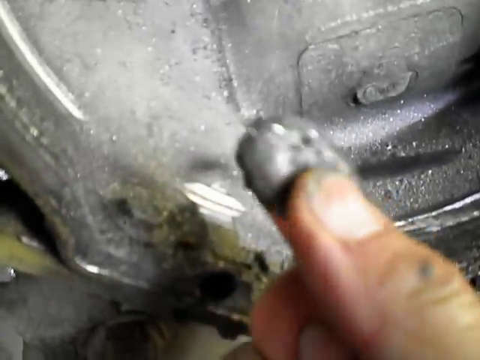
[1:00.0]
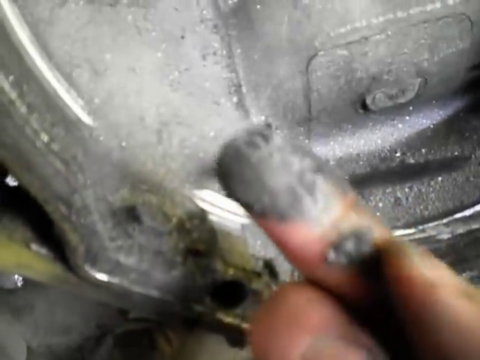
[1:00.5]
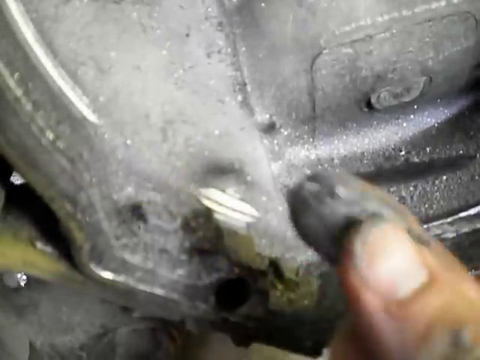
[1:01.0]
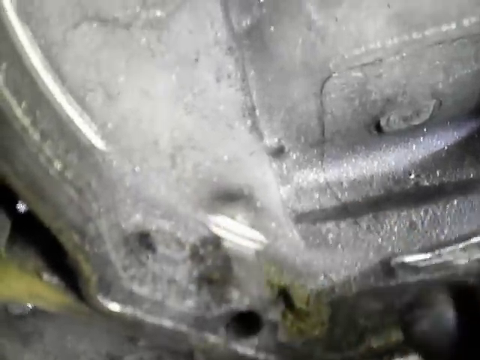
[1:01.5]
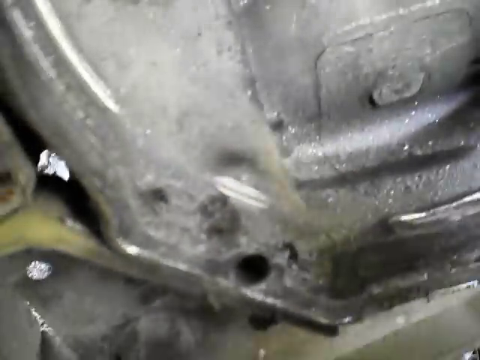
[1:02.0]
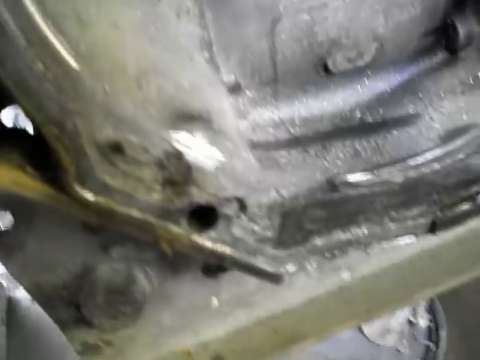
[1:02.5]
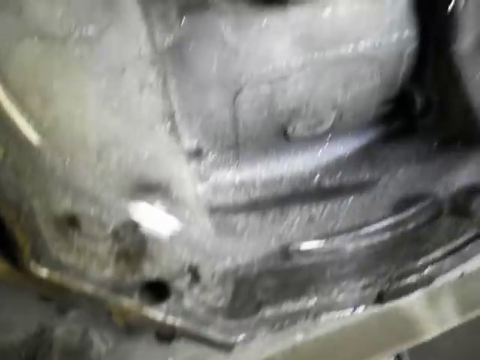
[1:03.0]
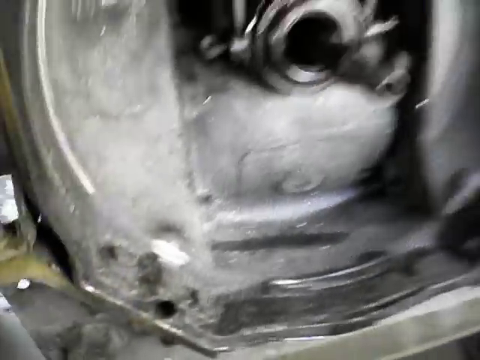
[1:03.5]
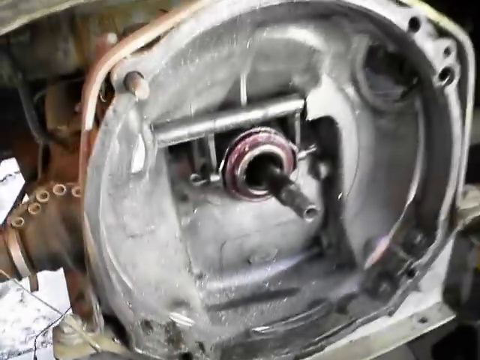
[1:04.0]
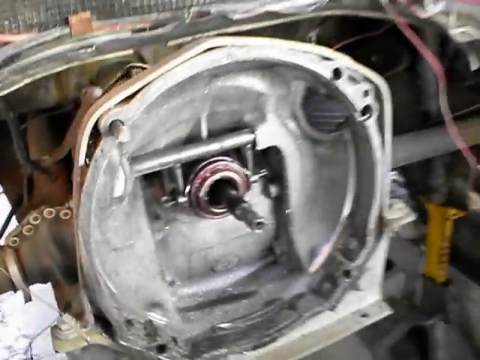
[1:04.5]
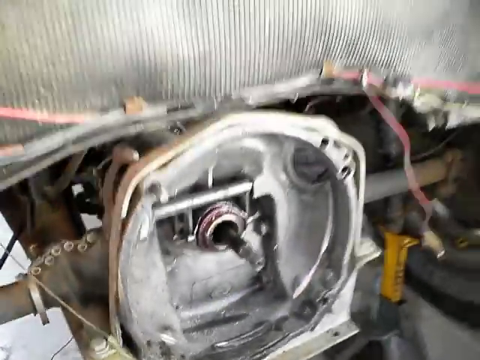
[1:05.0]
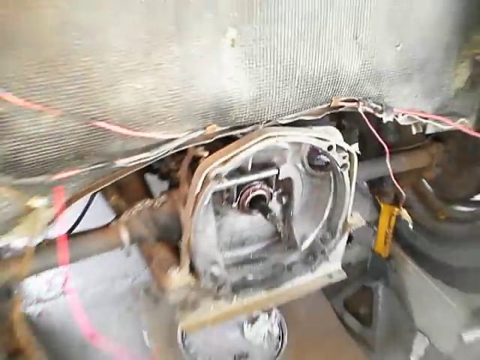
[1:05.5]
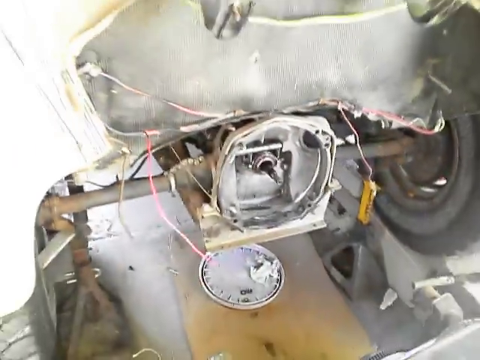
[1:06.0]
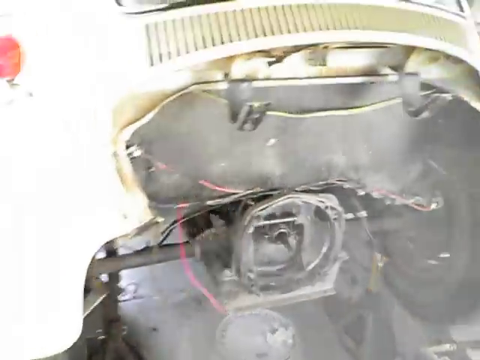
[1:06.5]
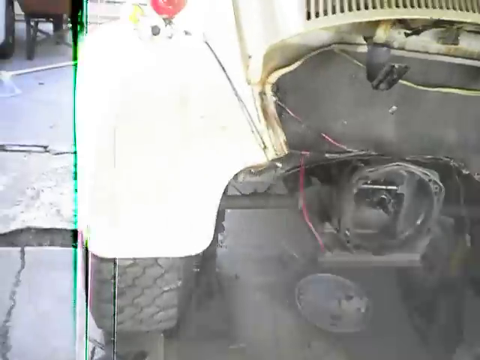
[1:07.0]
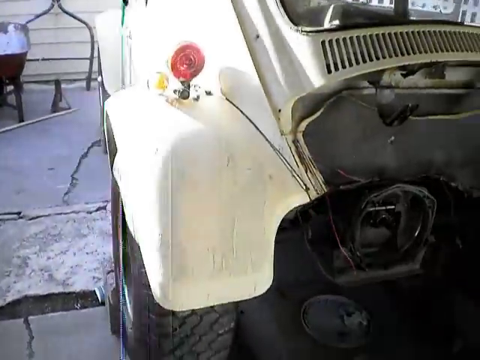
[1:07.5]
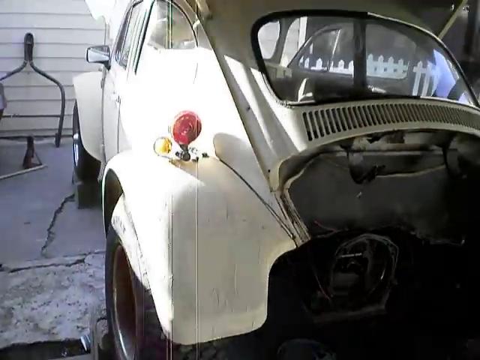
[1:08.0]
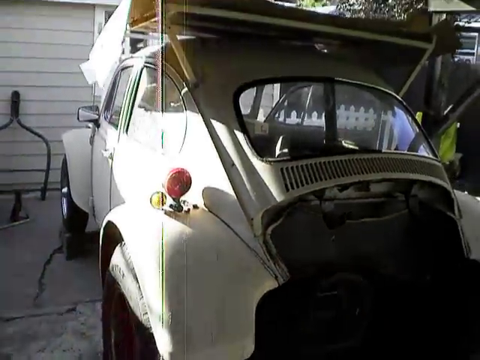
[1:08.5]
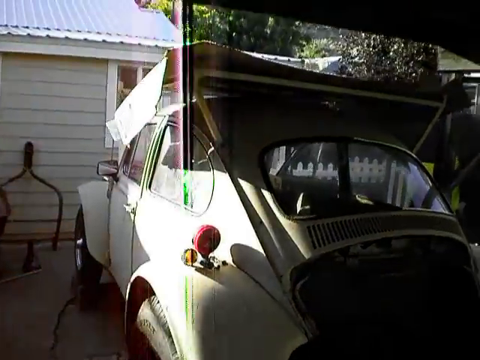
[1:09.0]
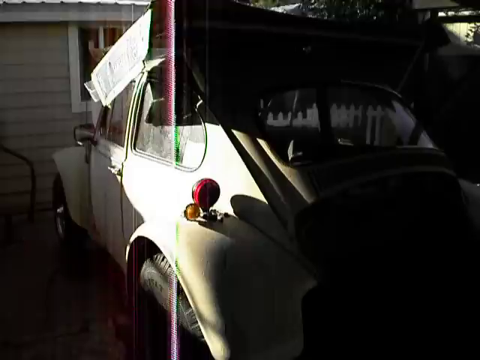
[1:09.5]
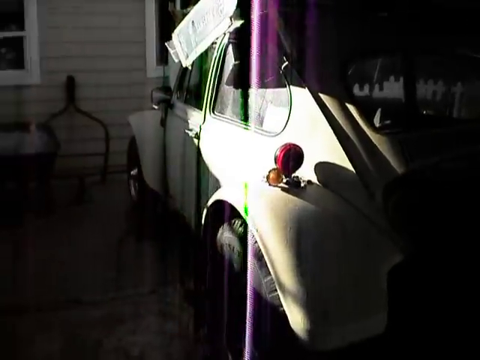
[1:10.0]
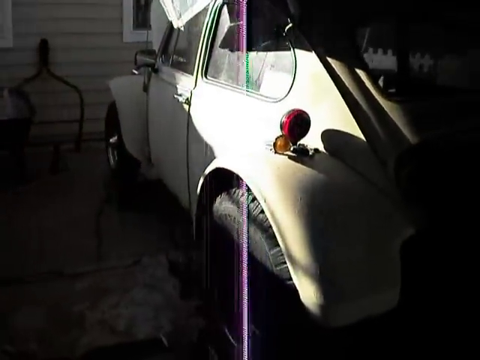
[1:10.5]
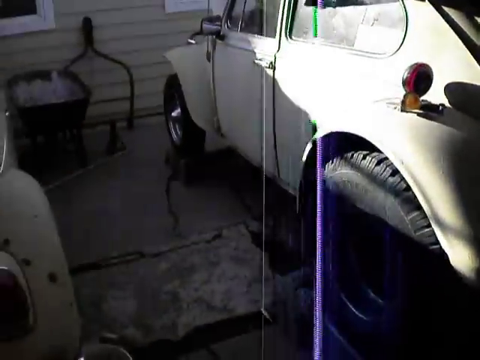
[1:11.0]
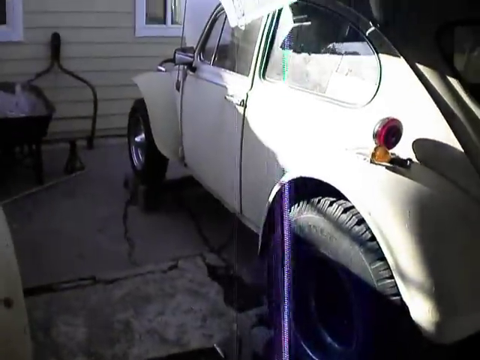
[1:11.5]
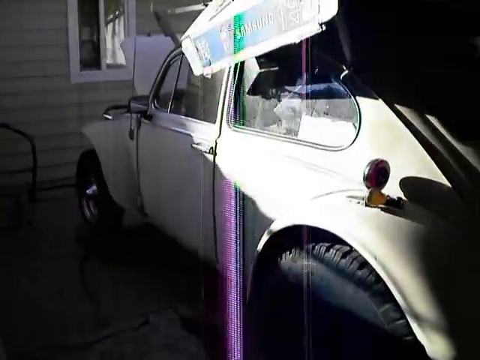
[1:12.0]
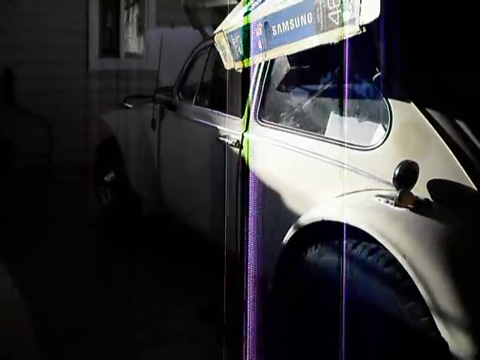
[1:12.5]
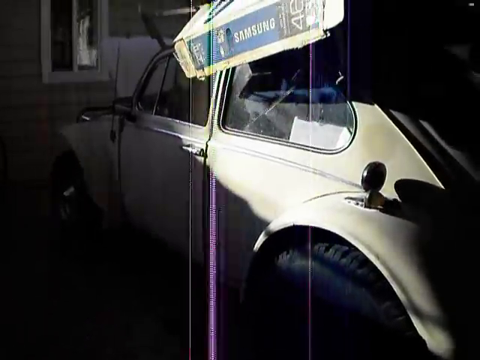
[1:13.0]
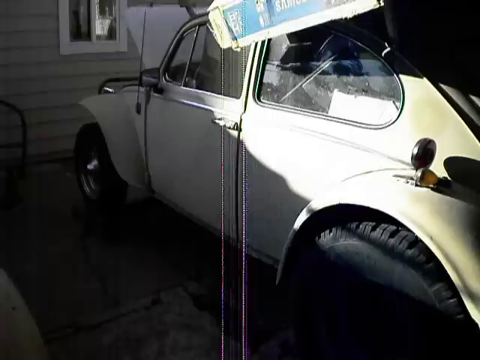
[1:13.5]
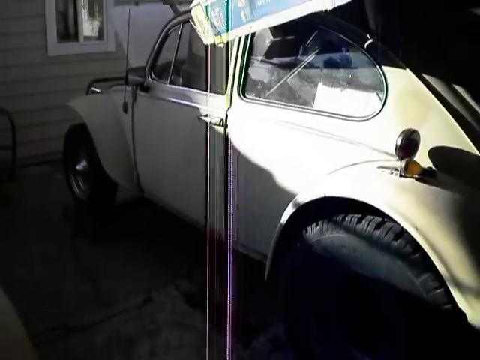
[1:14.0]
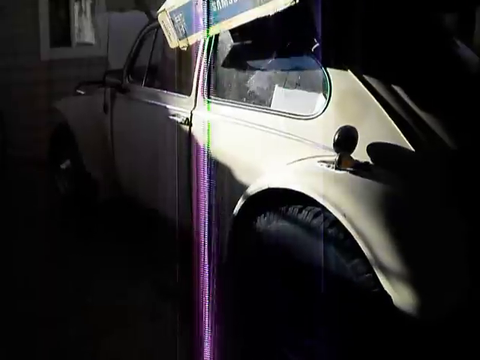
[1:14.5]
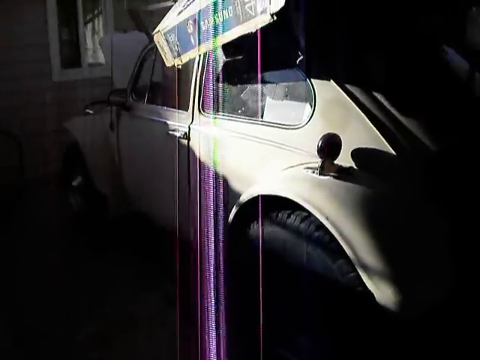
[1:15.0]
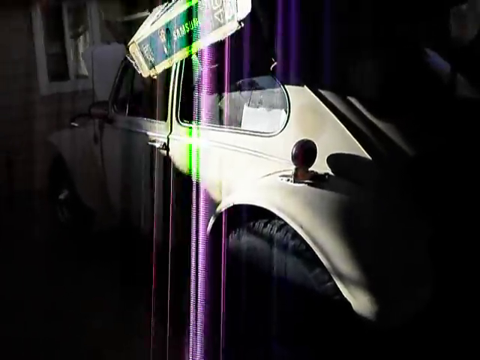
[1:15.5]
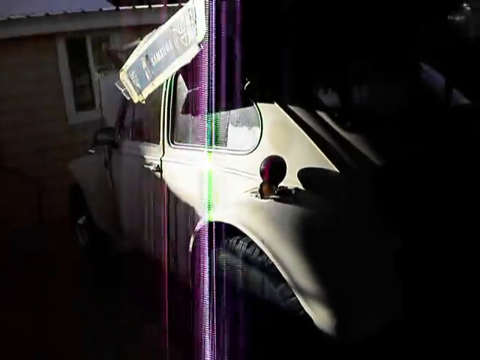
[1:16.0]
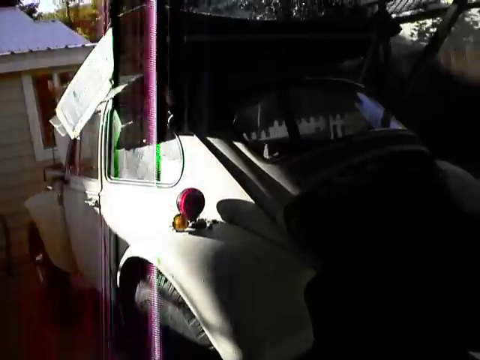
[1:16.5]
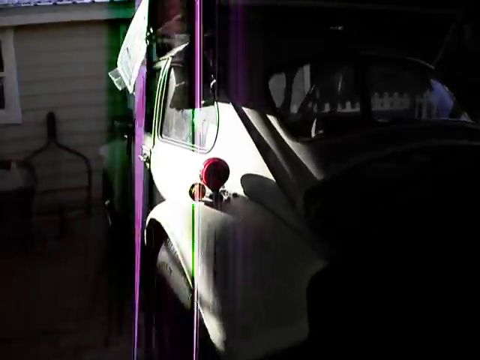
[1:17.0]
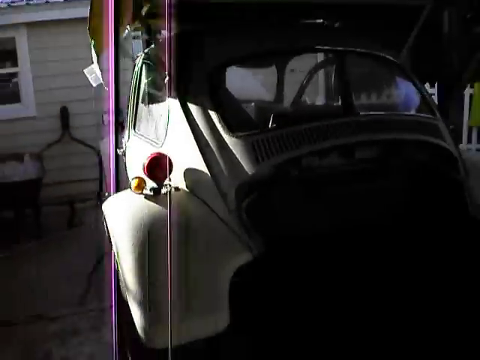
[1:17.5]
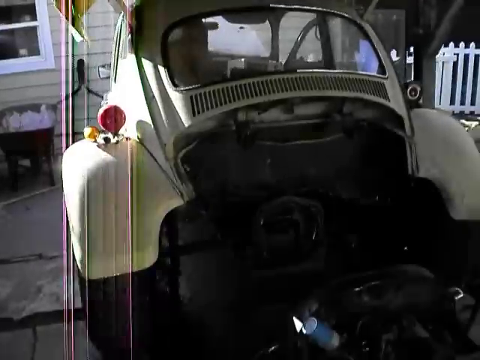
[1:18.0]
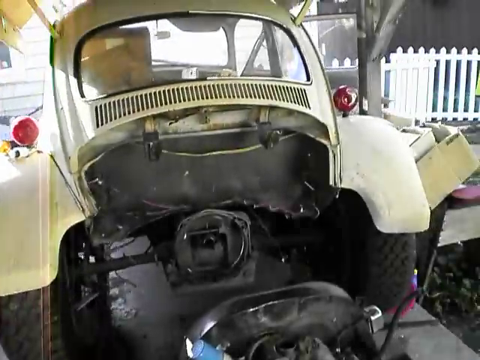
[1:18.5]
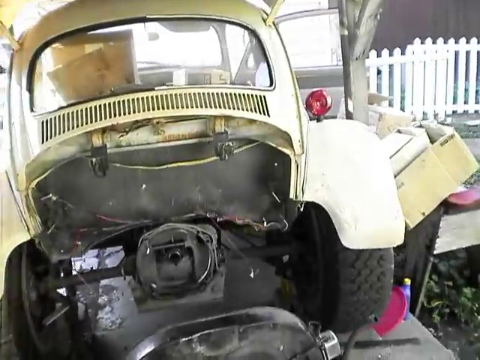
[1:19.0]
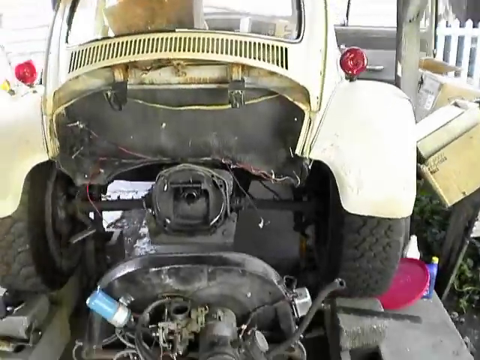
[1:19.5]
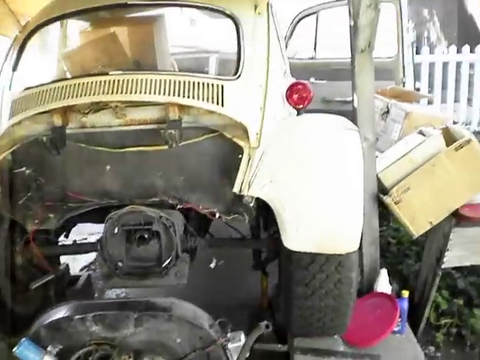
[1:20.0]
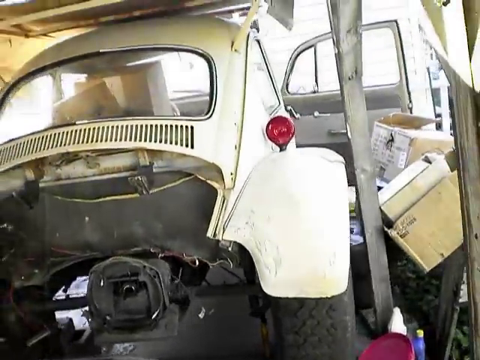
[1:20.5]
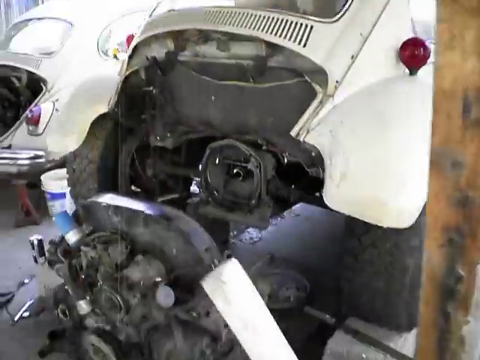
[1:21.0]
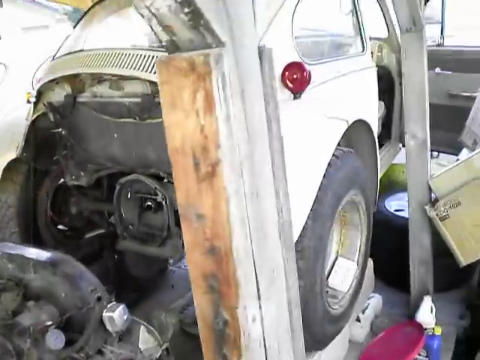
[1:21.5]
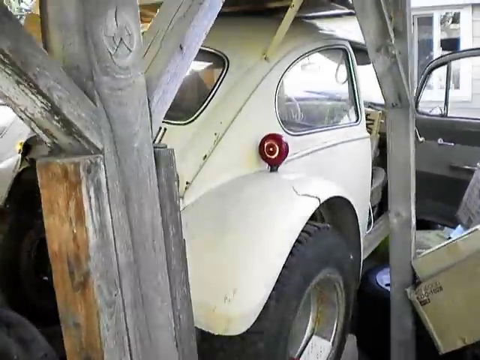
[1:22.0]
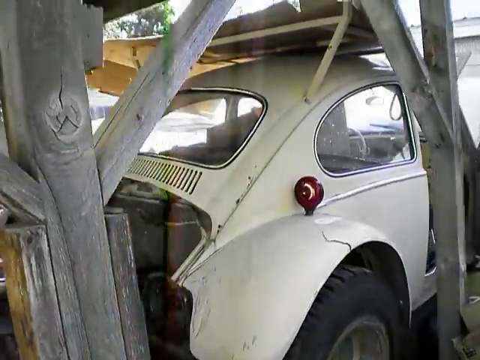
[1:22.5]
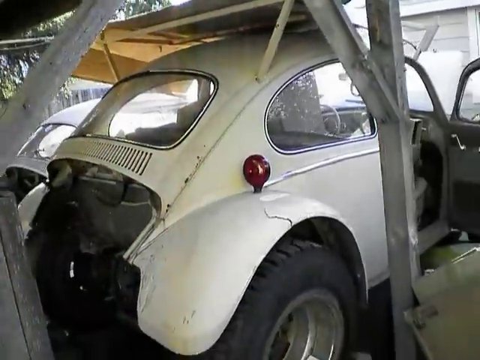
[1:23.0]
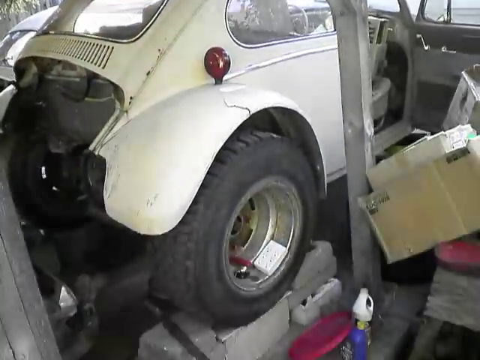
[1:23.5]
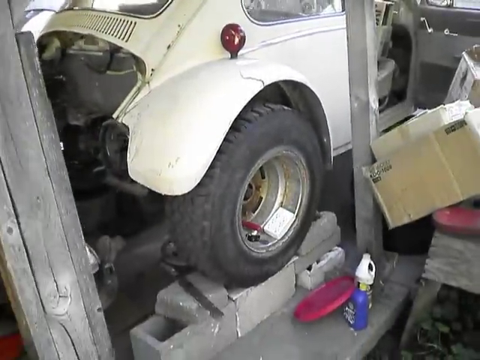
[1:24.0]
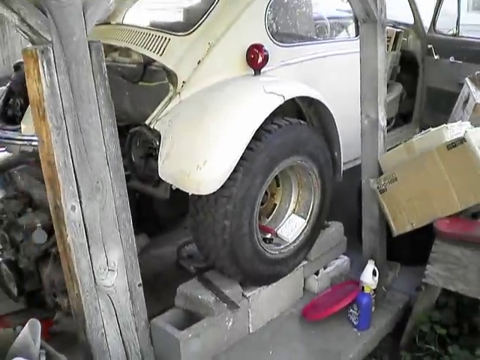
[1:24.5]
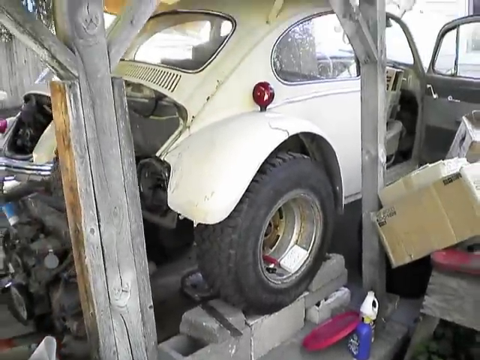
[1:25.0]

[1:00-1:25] Someone rubs what looks like silver metallic paint, though it could be dust, off a little silver cylinder at the back of a car, and it gets all over the finger. The camera then zooms out, revealing a white old-school car in a driveway, with a house, a tree and a white fence in the background. It is daytime with sunlight coming through. The car looks very old, and the work is on its back end. The footage is very blurry. A lot of tools are on the ground, and the car is on bricks.